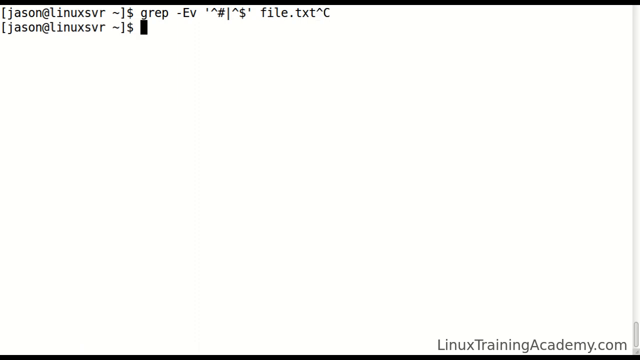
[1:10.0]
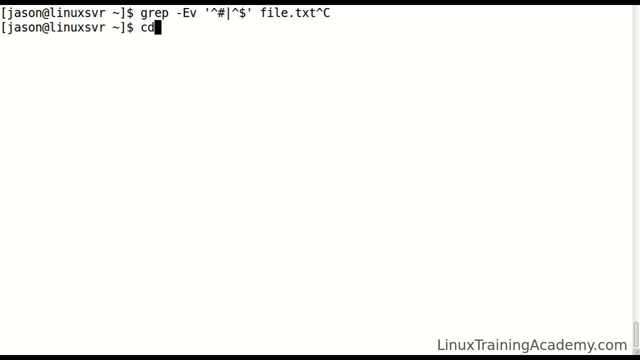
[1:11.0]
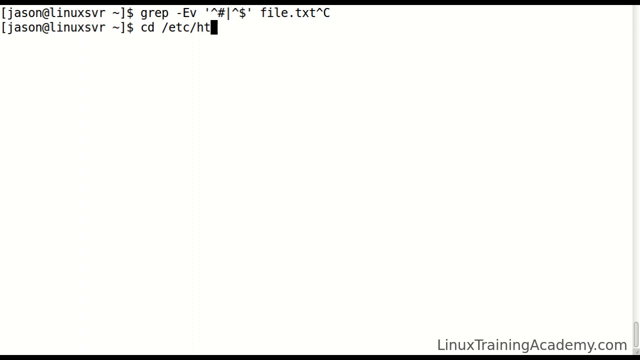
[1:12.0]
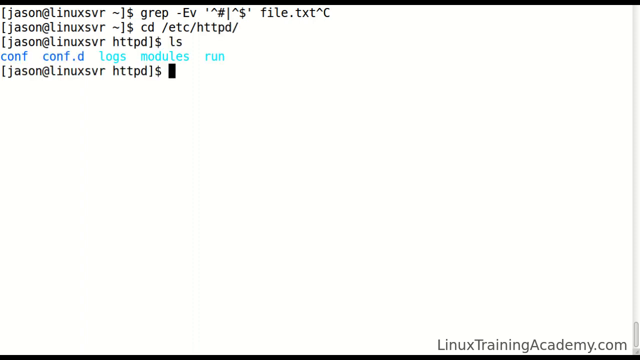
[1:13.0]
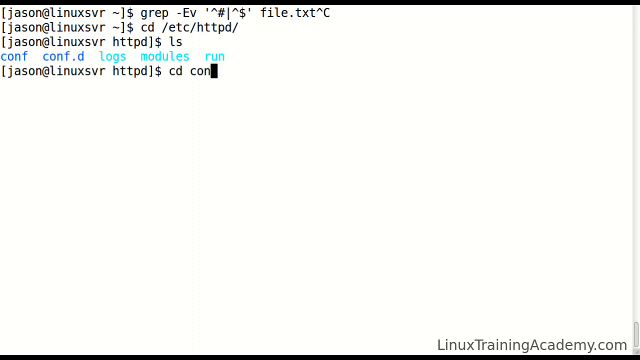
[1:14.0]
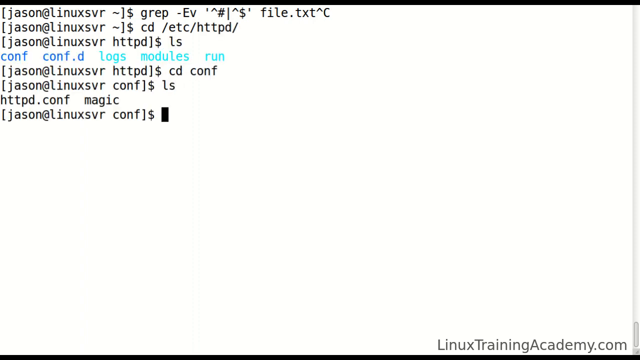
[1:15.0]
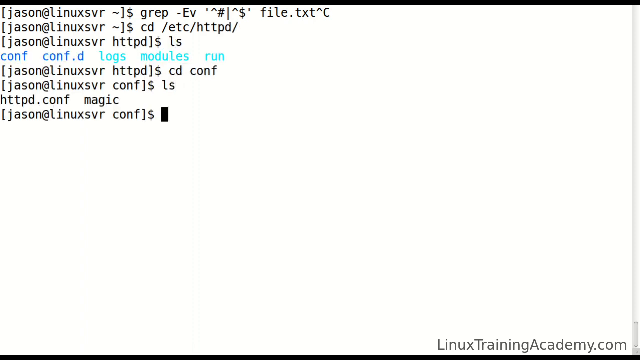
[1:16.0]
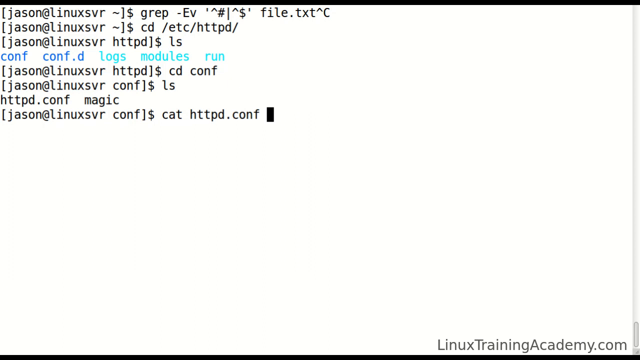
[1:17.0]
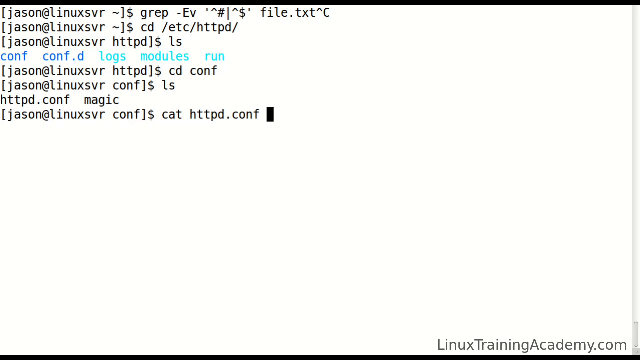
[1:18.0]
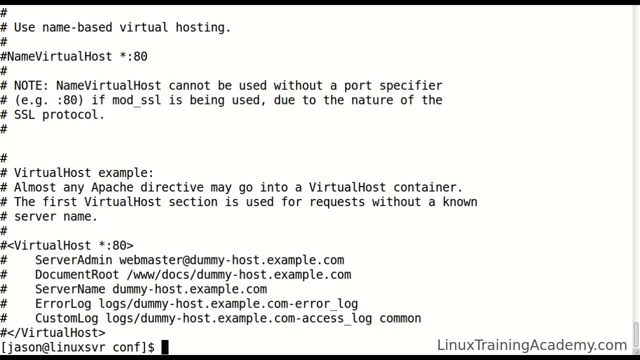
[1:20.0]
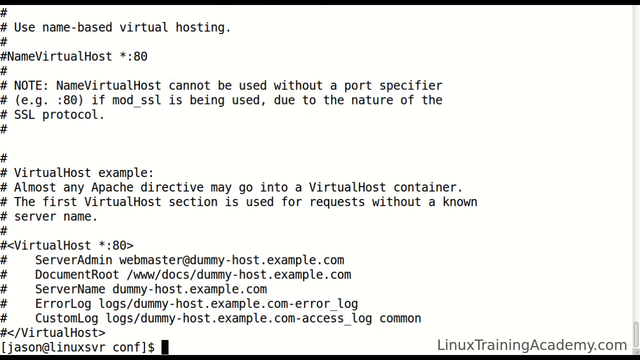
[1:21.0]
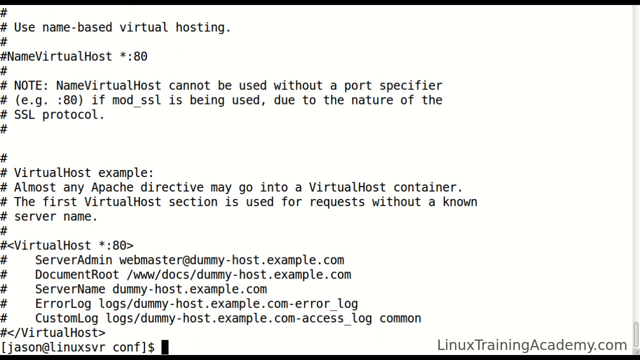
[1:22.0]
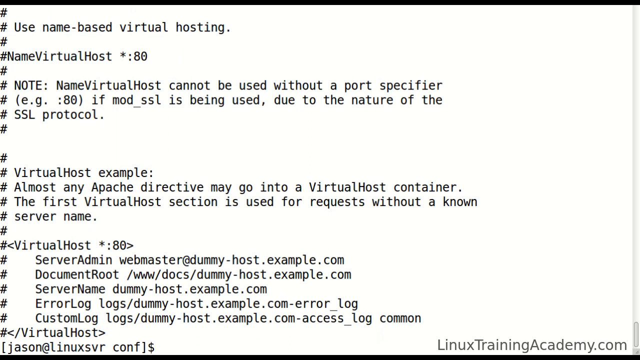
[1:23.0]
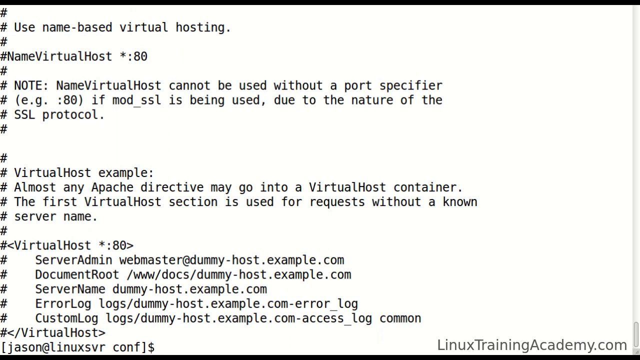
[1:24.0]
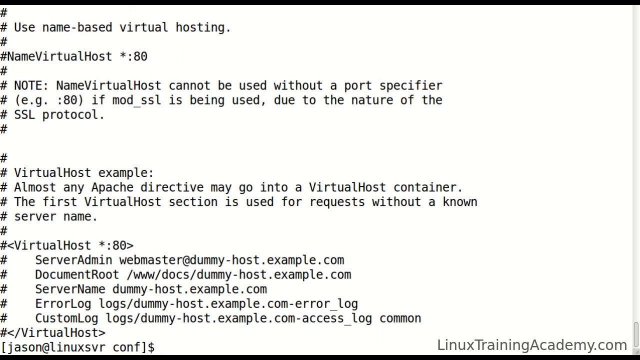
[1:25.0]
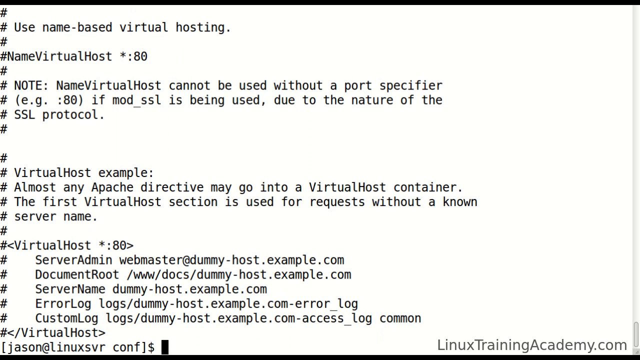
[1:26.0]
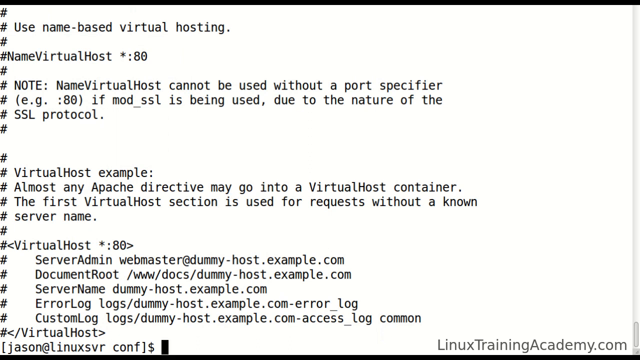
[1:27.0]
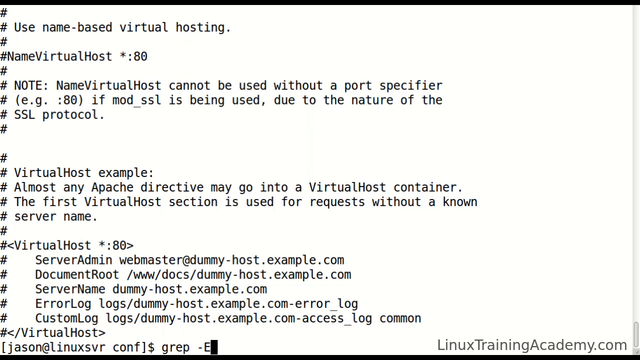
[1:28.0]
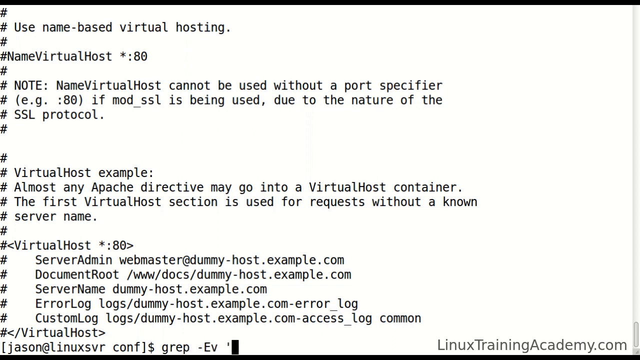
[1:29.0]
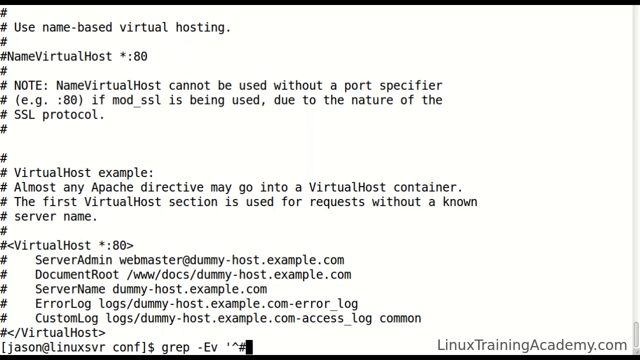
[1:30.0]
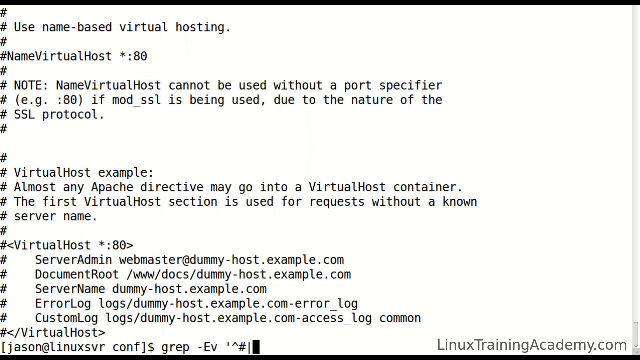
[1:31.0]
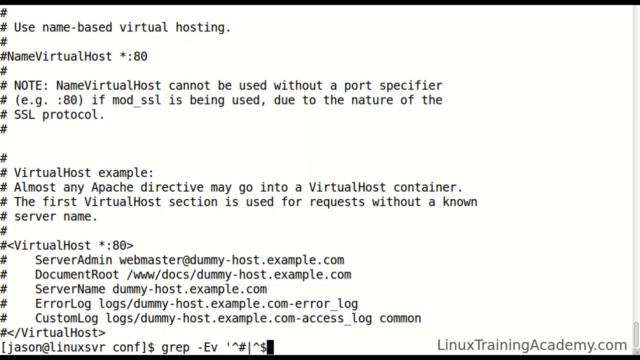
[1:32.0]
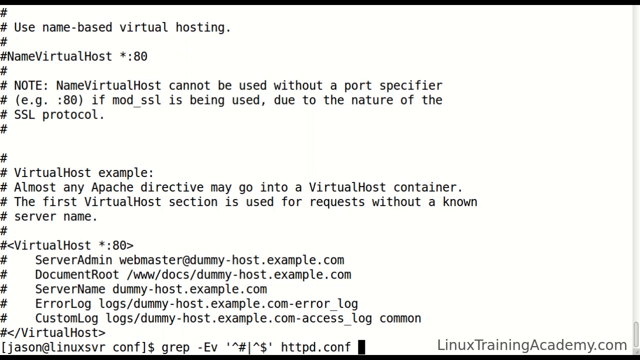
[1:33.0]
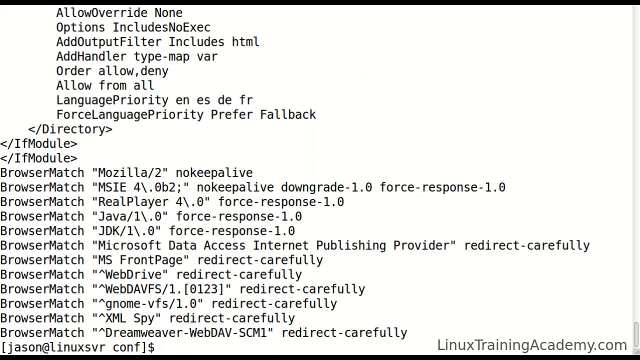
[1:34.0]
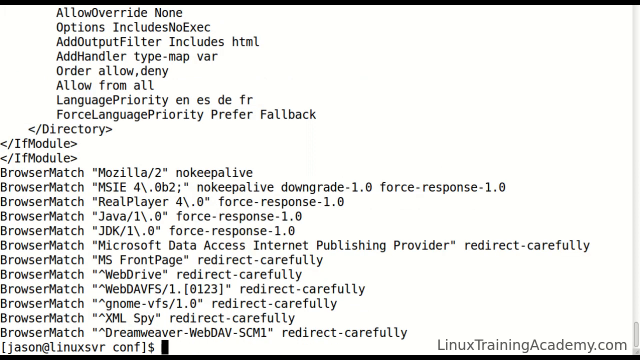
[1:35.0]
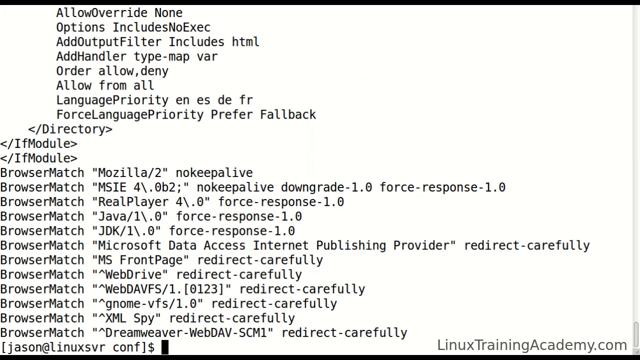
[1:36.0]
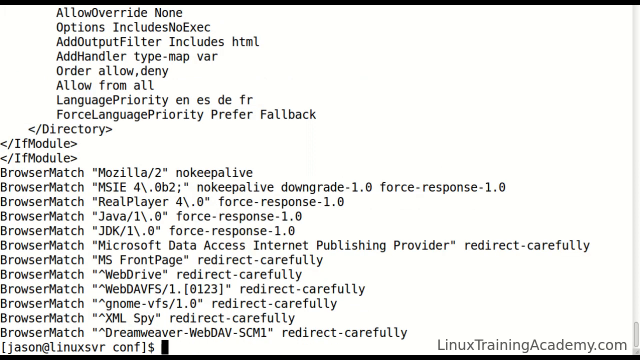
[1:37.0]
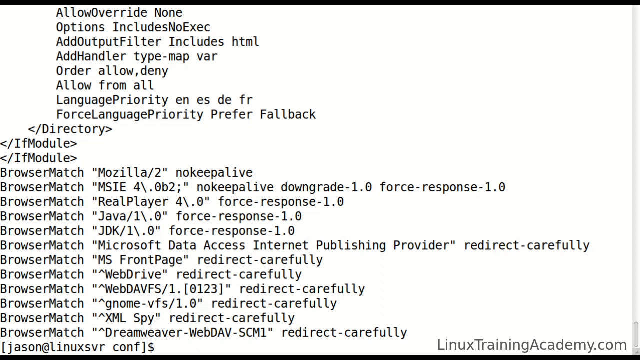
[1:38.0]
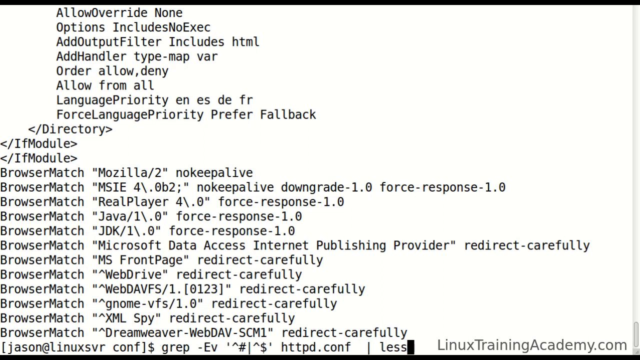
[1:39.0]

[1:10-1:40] A white background screen that looks like a text coding window has a scroll bar on the right side scrolled all the way down, and a black text overlay says "linuxtrainingacademy.com". In the top left-hand corner are two lines of text: the first reads "[jason"linuxsvr ~ ]$ grep -Ev '^# |^$'" and the second reads "[jason"linuxsvr ~ ]$". A cursor moves as more text is added to the second line, reading "cd /etc /httpd /", and then six more lines of code quickly appear underneath, apparently too fast to have been typed in real time unless the video was sped up. The video then shows a different screen with a white background filled with text, with hashtags running down the side of each line. It appears to be about a virtual host example showing the coding required. More text is then added at the bottom of the screen, with the cursor moving as it is typed.